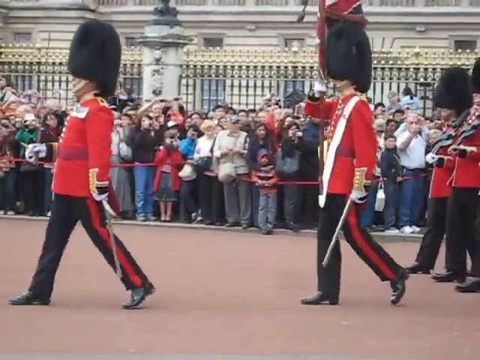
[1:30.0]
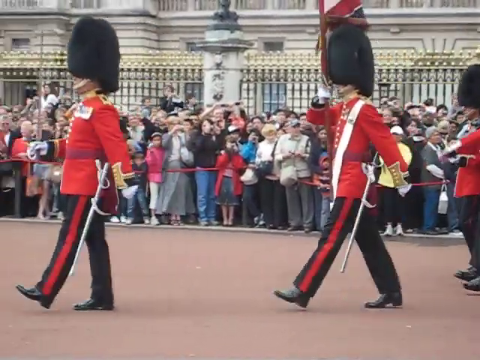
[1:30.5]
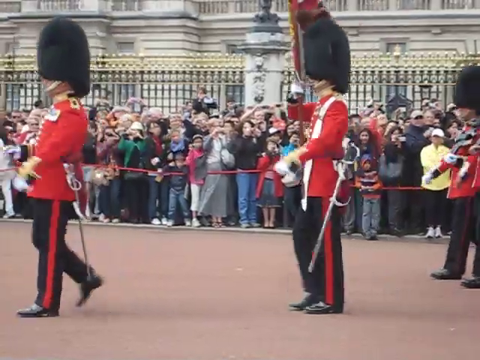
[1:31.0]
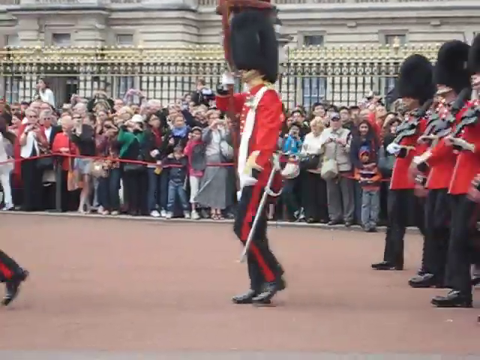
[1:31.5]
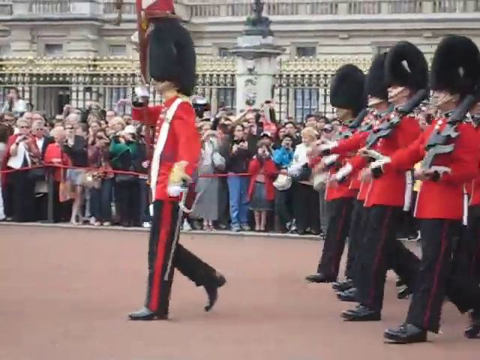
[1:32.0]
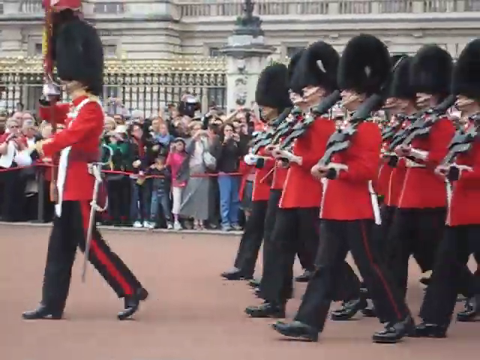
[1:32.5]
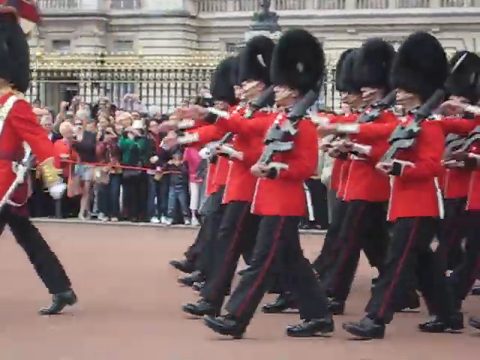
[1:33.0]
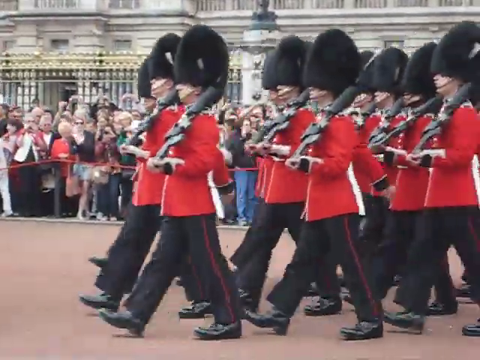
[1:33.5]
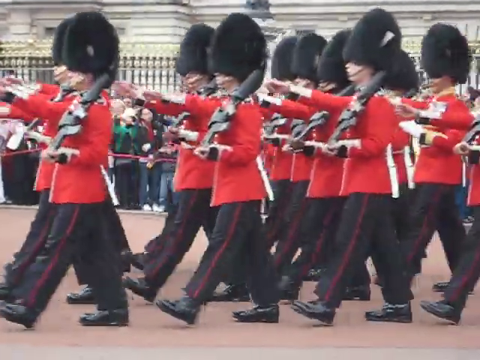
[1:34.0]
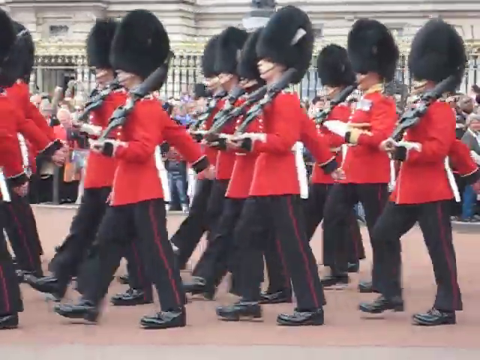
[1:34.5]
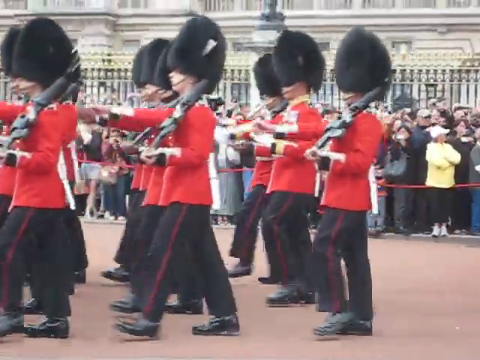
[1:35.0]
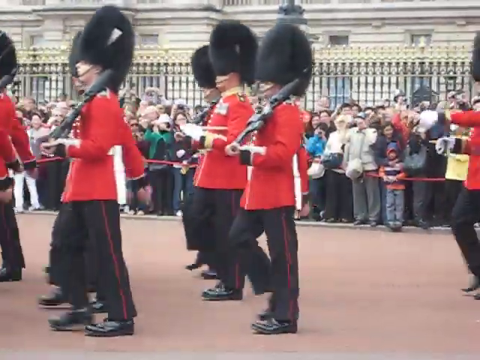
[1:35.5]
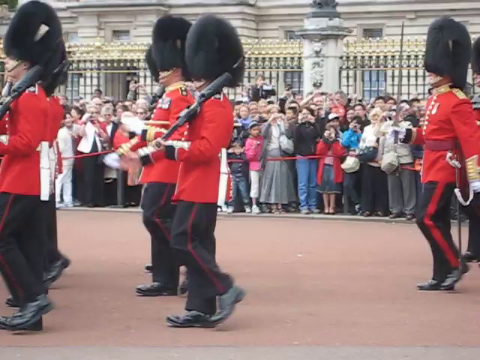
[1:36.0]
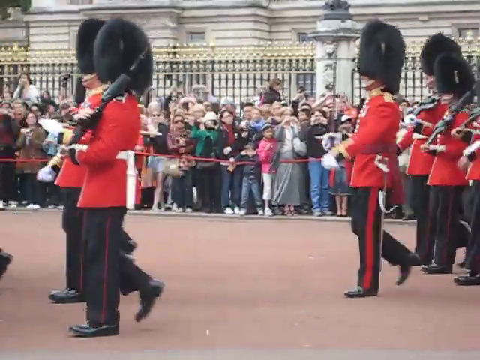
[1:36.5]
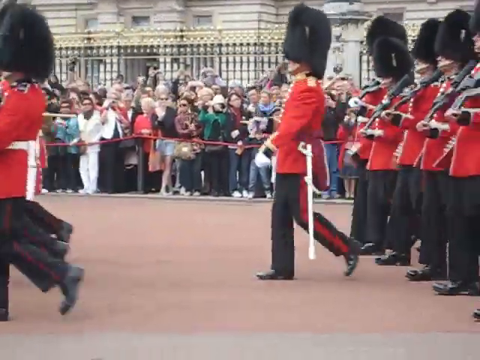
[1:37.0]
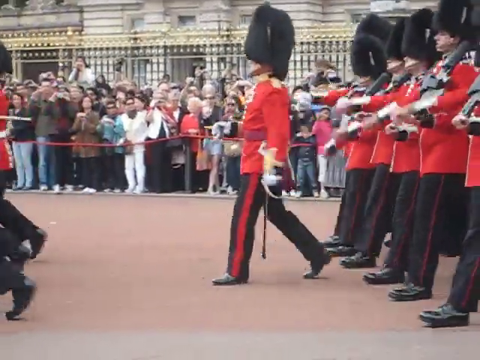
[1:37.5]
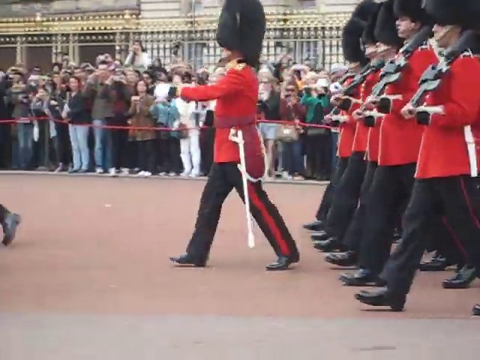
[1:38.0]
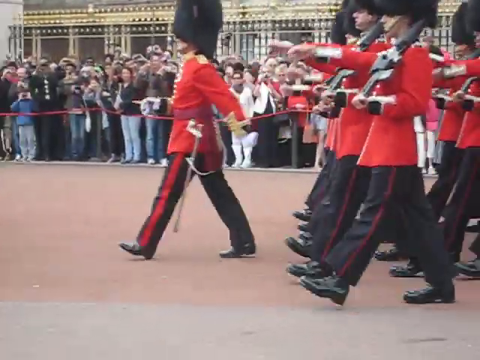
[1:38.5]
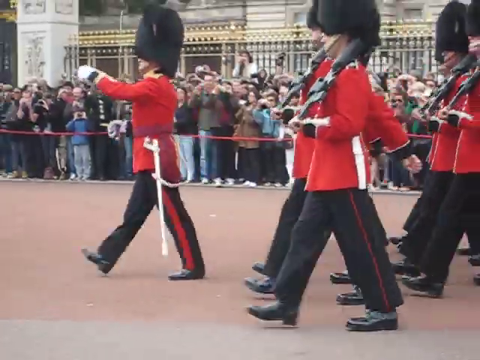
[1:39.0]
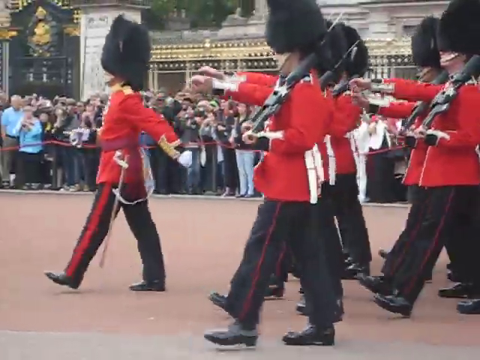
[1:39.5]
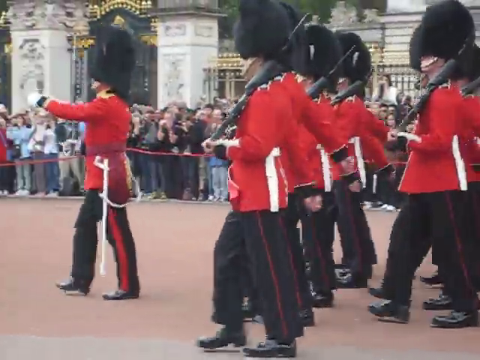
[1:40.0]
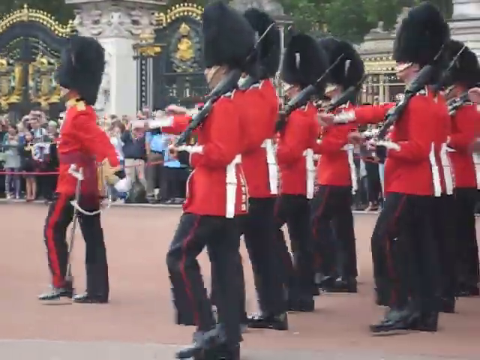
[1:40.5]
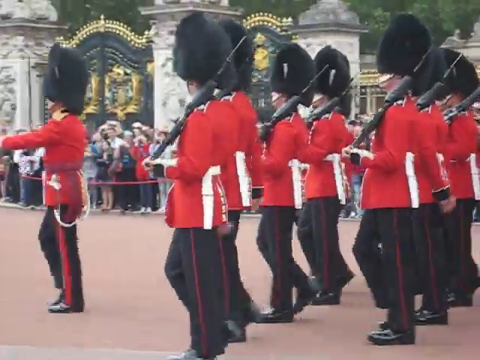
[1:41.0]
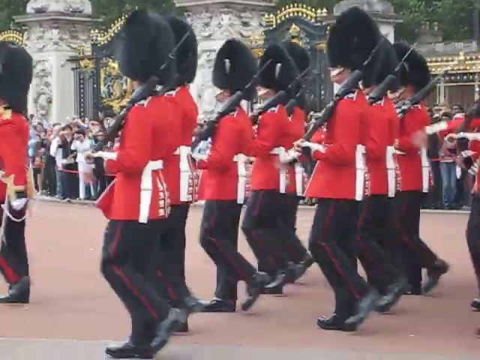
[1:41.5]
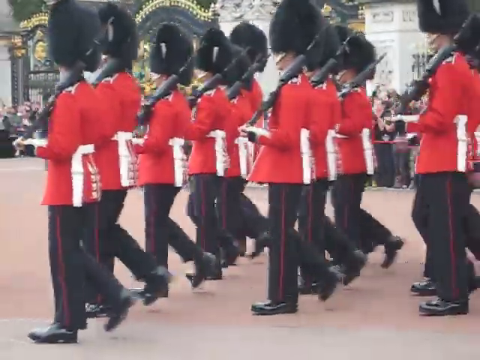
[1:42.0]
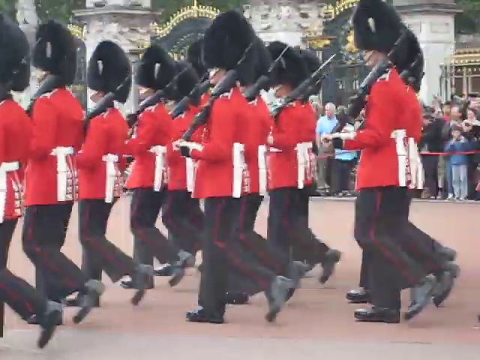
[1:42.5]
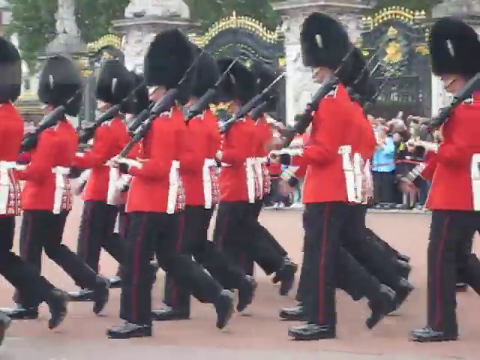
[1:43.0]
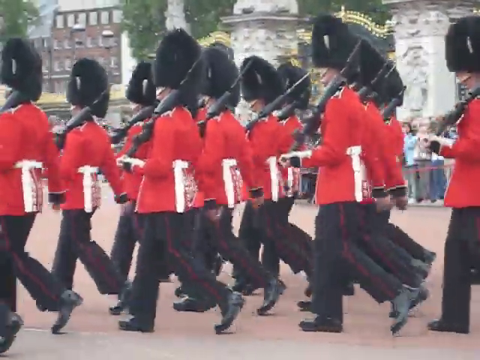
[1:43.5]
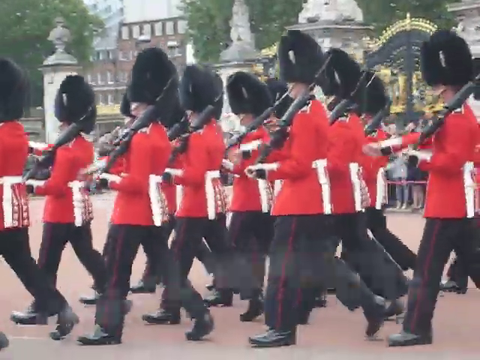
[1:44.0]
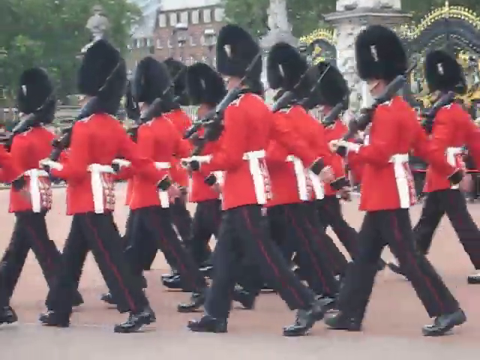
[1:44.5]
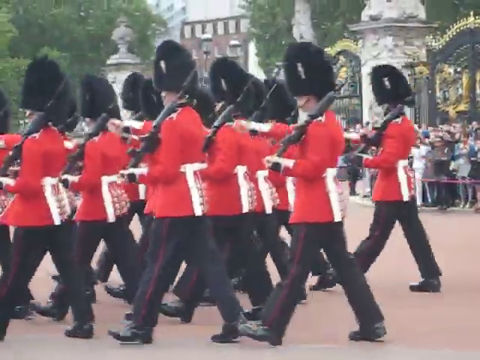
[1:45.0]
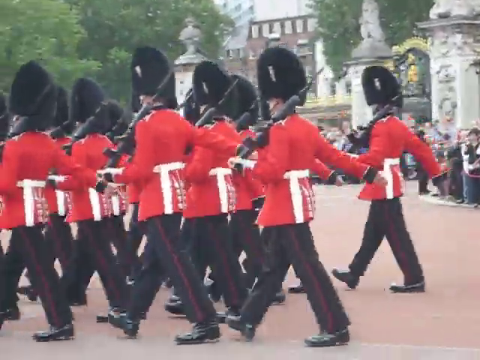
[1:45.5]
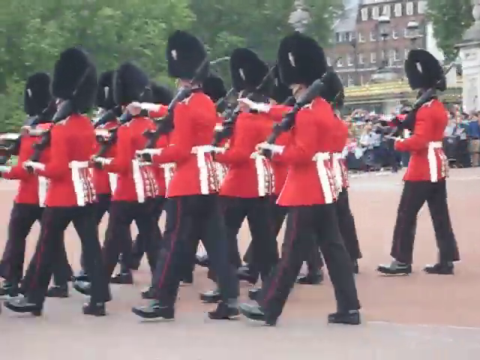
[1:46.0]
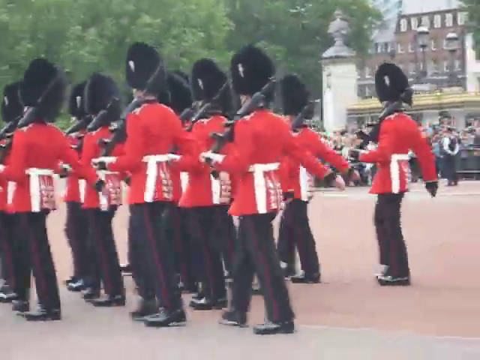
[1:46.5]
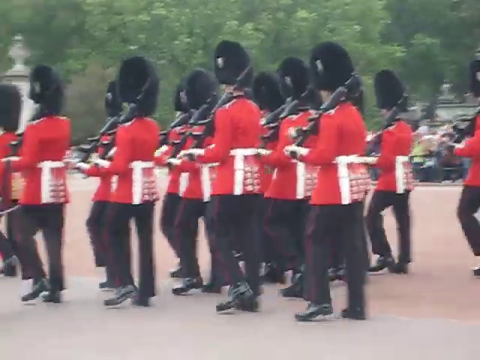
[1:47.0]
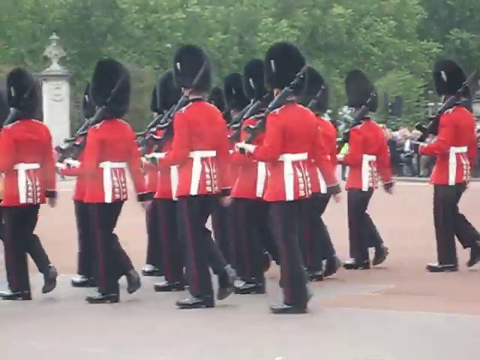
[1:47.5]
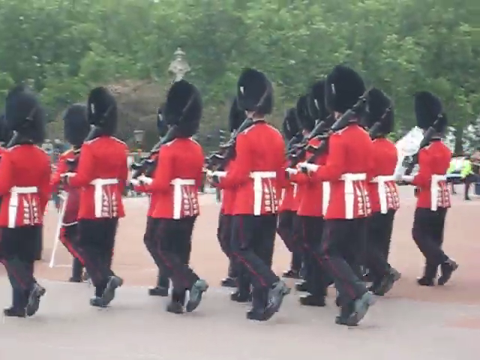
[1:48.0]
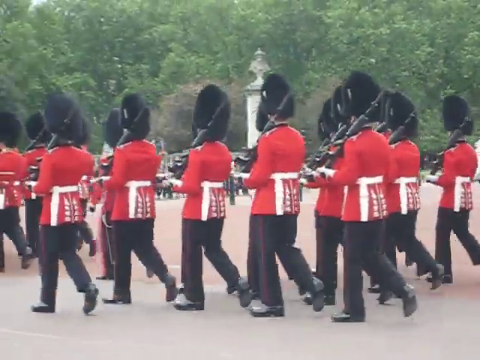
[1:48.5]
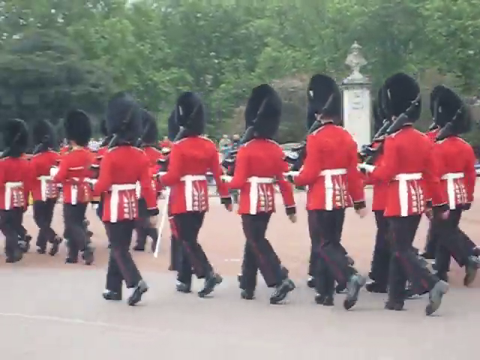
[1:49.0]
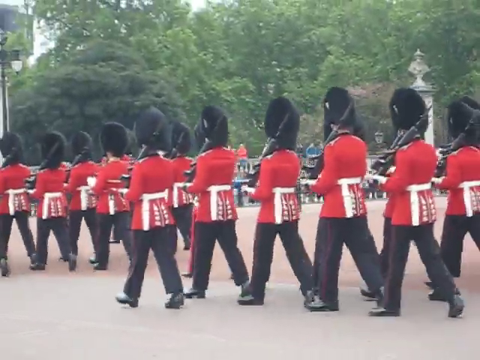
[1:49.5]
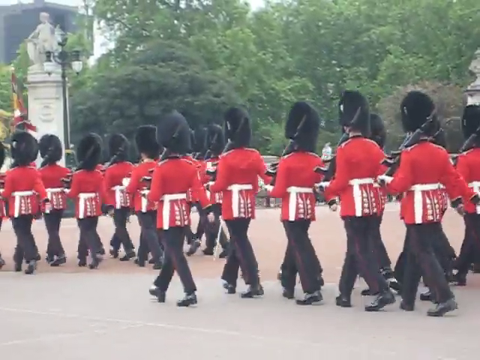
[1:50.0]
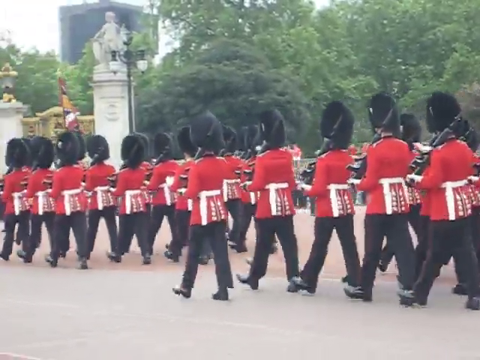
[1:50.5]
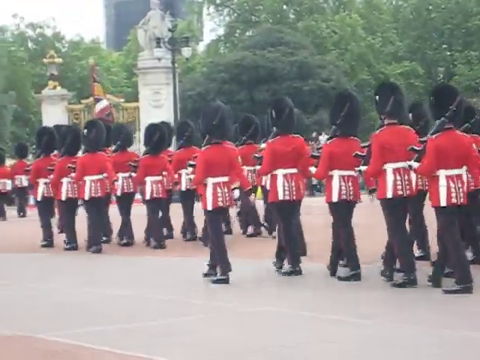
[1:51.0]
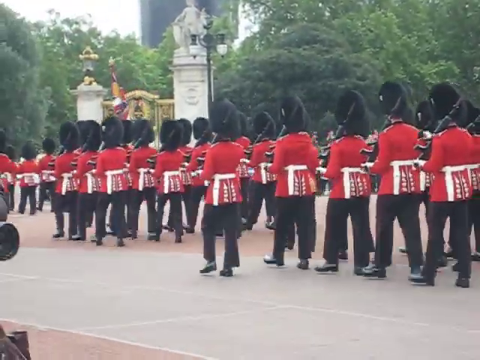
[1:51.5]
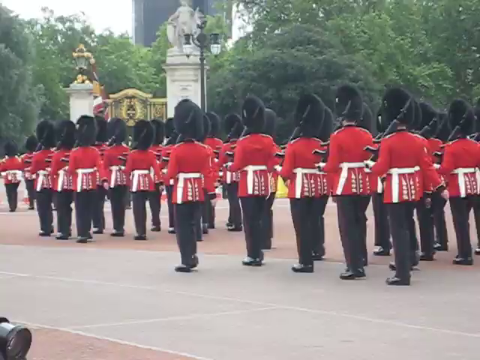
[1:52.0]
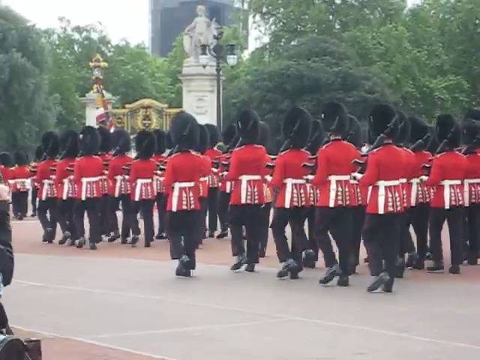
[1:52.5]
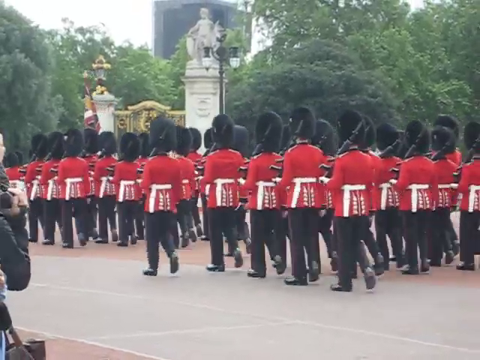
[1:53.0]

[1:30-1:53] The Queen's Guard is in front of Buckingham Palace. A hundred or more tourists are lined up against the fence in front of the palace, watching the guards. On the road in front of the tourists, the Queen's Guard passes by, moving towards the left side of the frame. The very first guard holds a sword in his hand with the tip of the blade pointing up towards the sky. Directly behind him is a Queen's Guard member holding a flag. Behind him is a very large group of guard members, all holding rifles in their left hands with the tip of the rifle resting on their left shoulders. They march in formation, wearing the typical Queen's Guard uniforms of red blazers, black pants with a red stripe, black boots and tall fur hats that are about a foot tall.